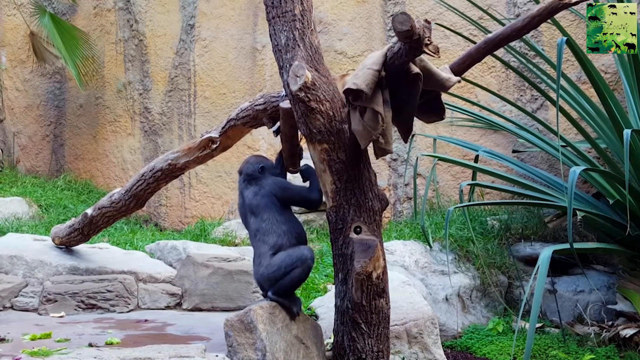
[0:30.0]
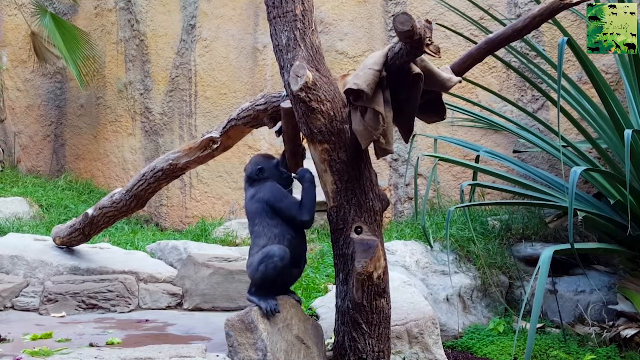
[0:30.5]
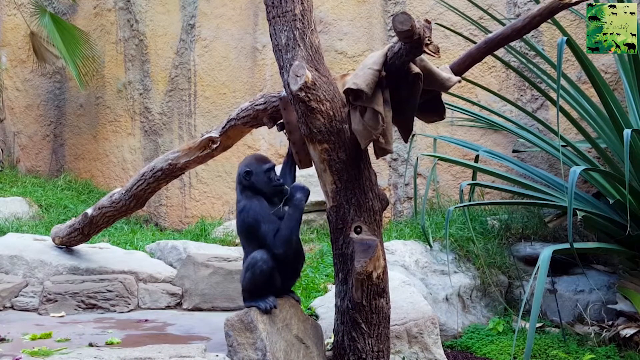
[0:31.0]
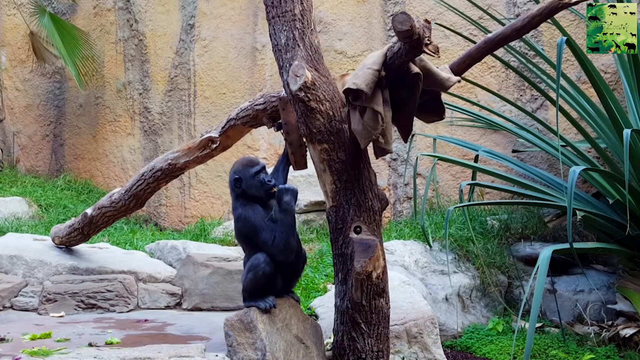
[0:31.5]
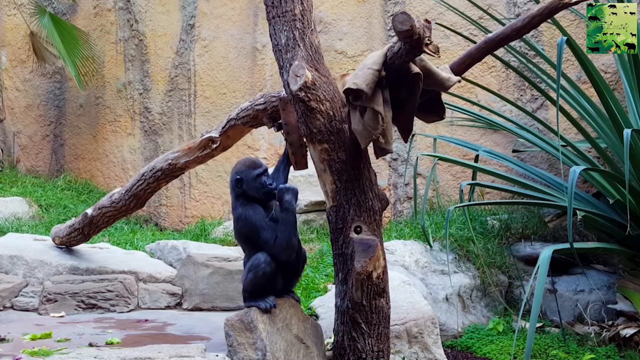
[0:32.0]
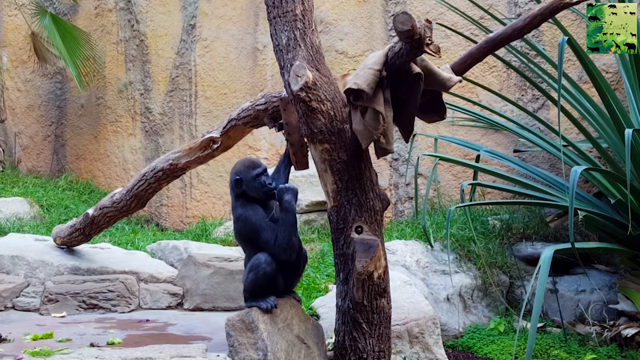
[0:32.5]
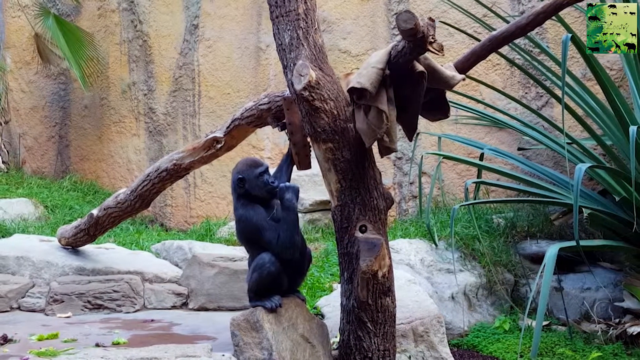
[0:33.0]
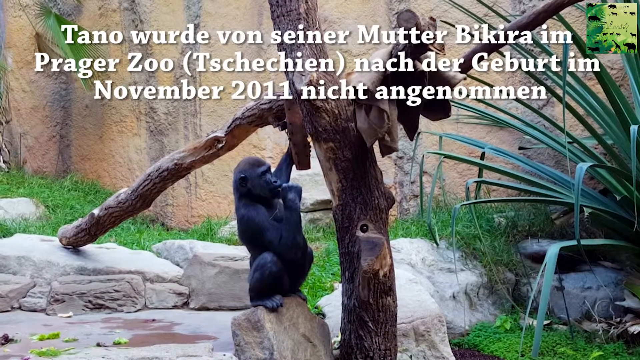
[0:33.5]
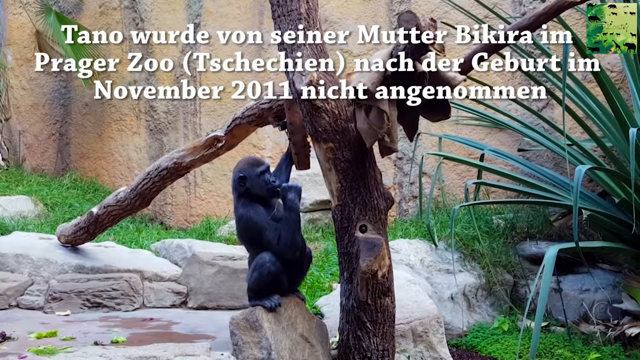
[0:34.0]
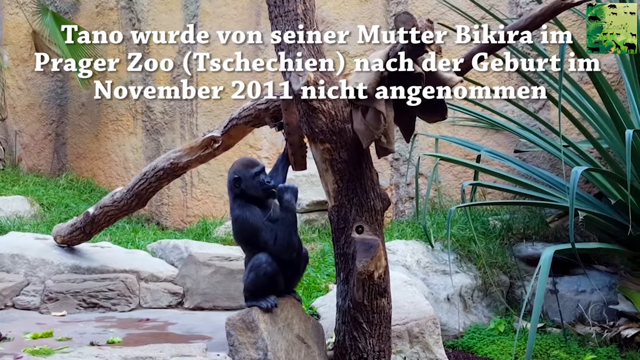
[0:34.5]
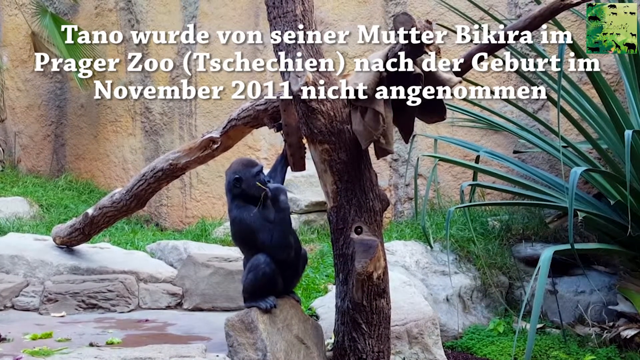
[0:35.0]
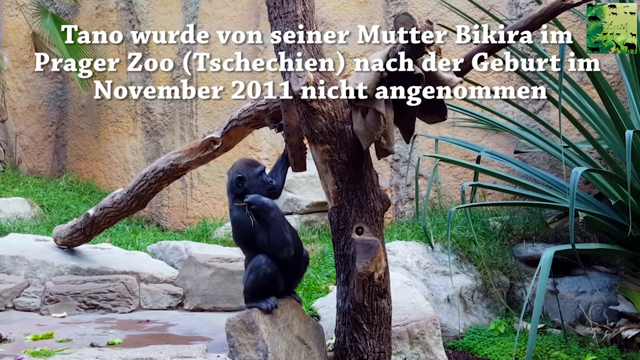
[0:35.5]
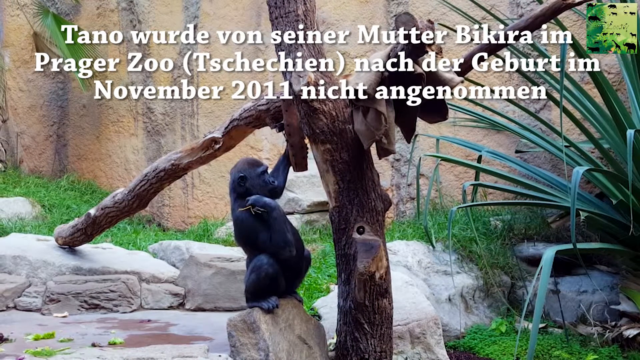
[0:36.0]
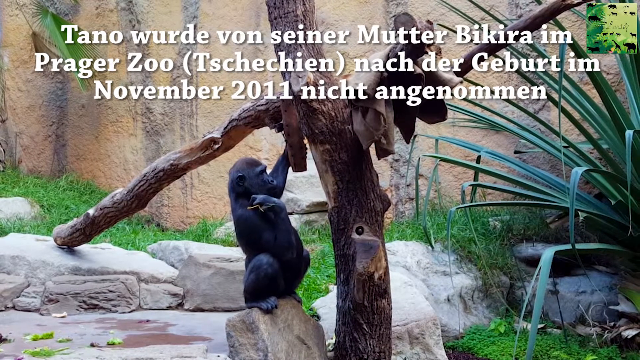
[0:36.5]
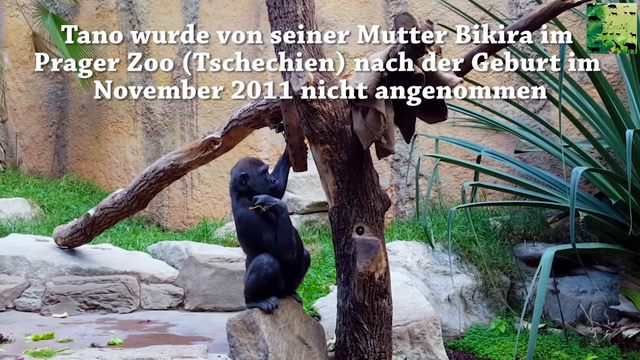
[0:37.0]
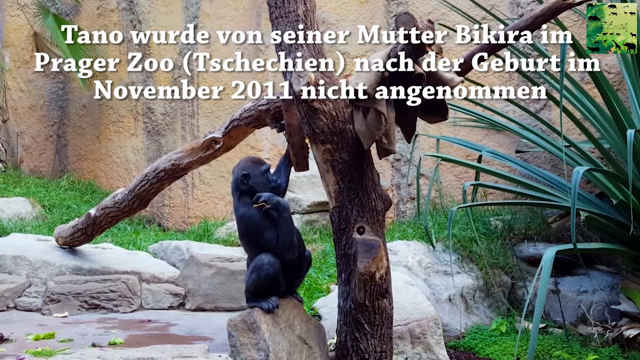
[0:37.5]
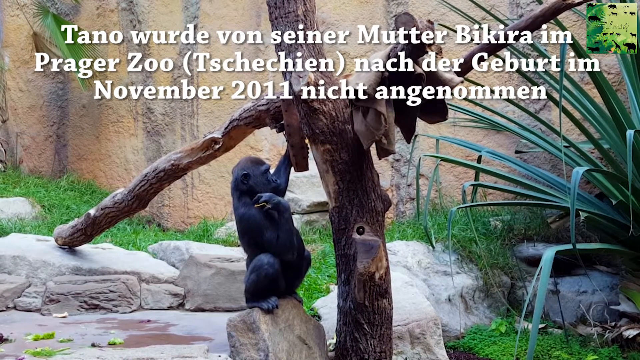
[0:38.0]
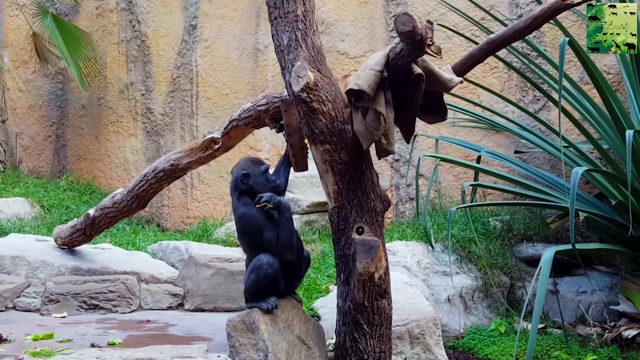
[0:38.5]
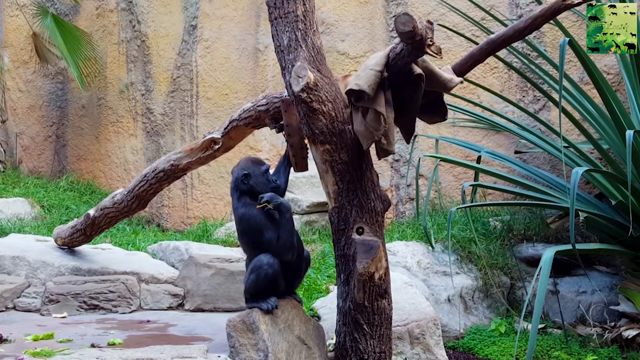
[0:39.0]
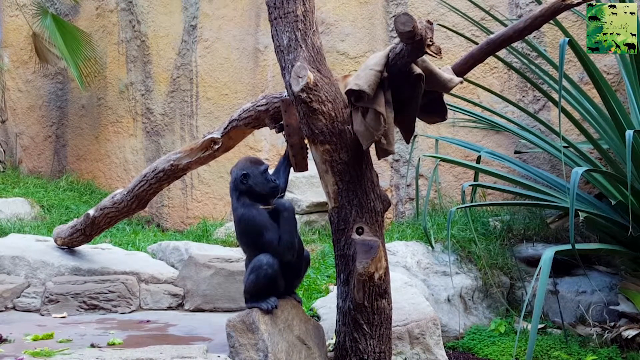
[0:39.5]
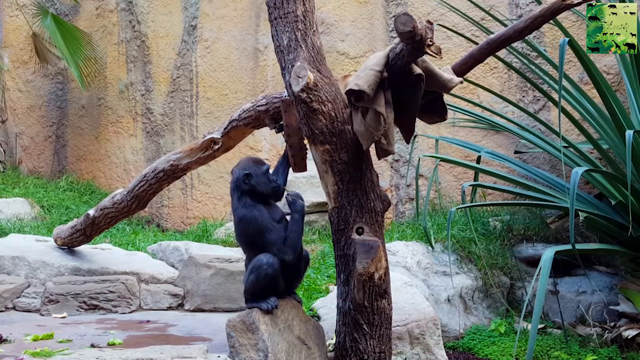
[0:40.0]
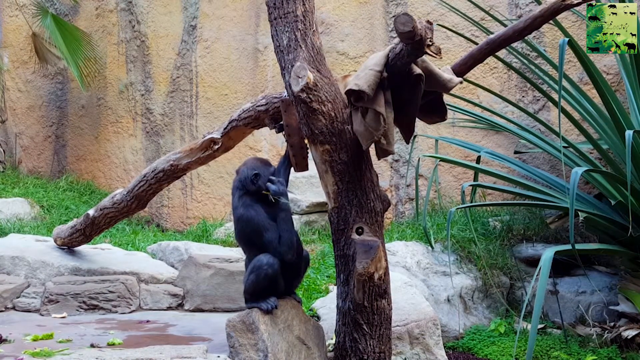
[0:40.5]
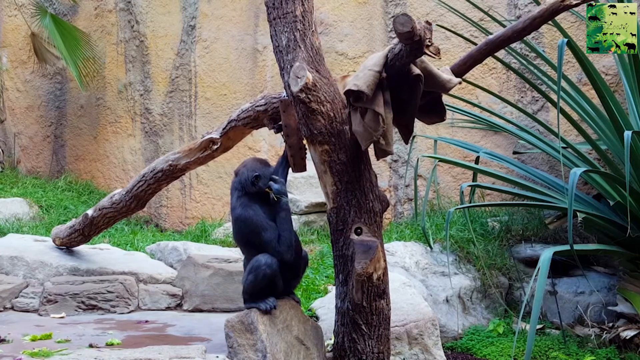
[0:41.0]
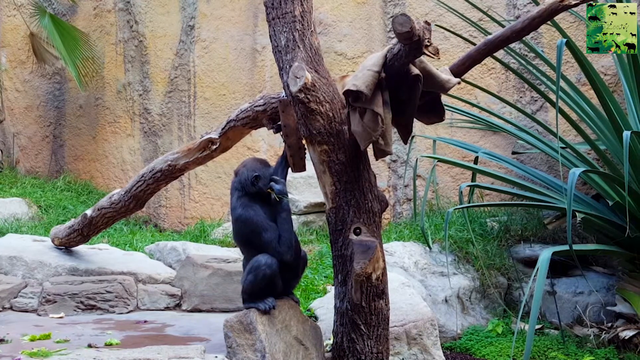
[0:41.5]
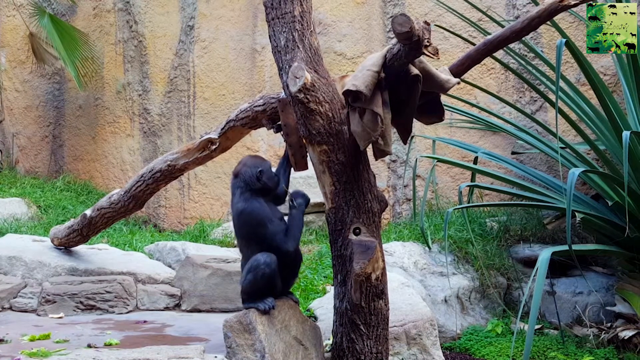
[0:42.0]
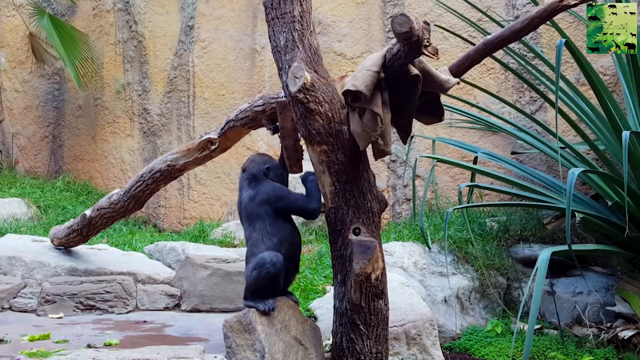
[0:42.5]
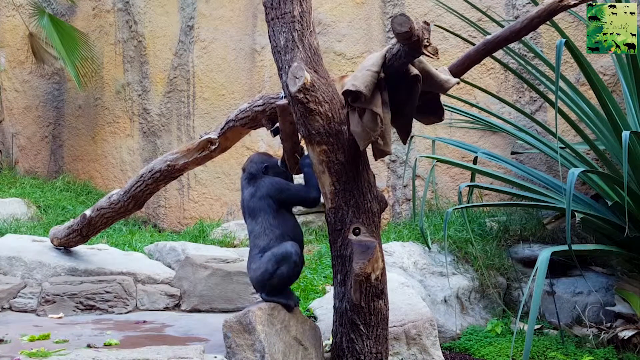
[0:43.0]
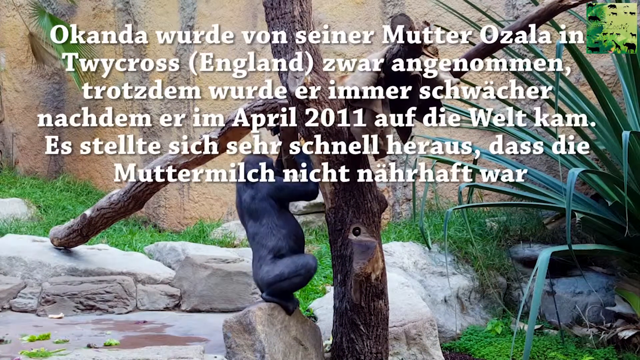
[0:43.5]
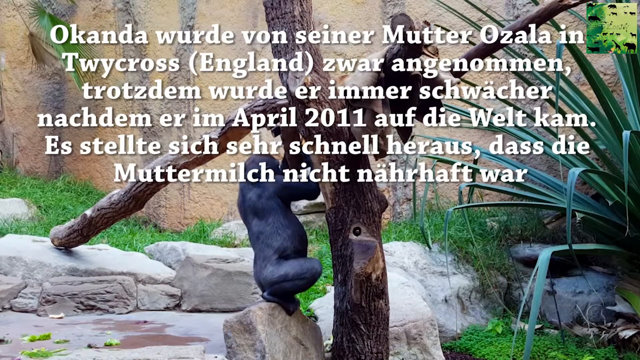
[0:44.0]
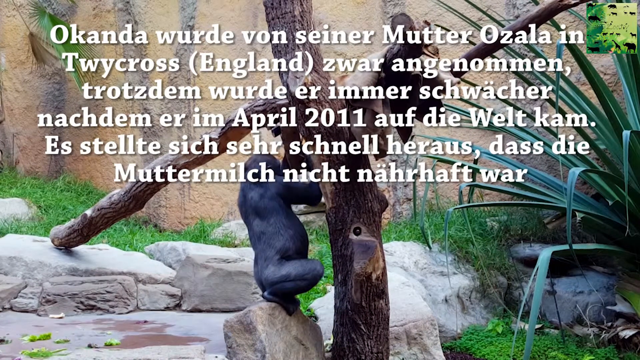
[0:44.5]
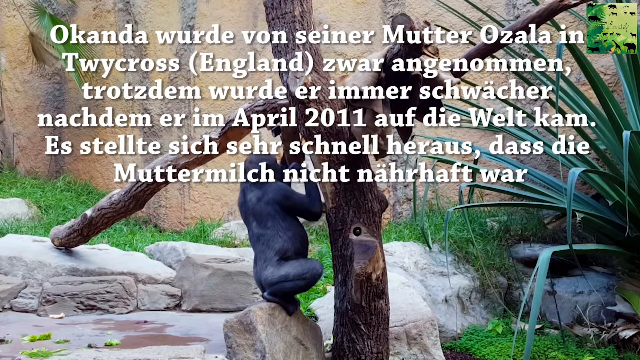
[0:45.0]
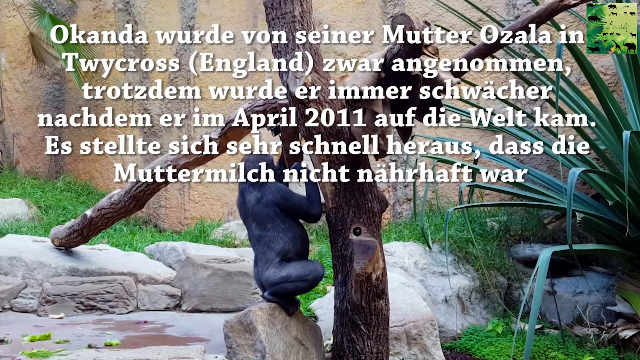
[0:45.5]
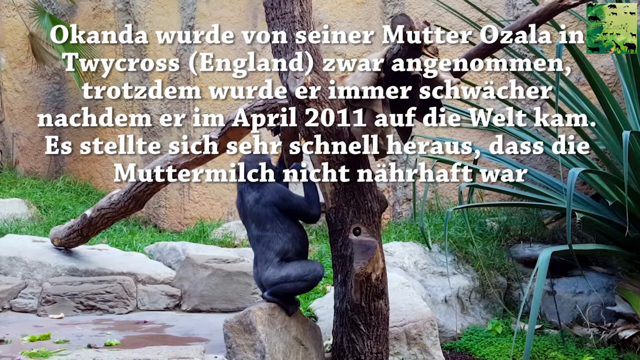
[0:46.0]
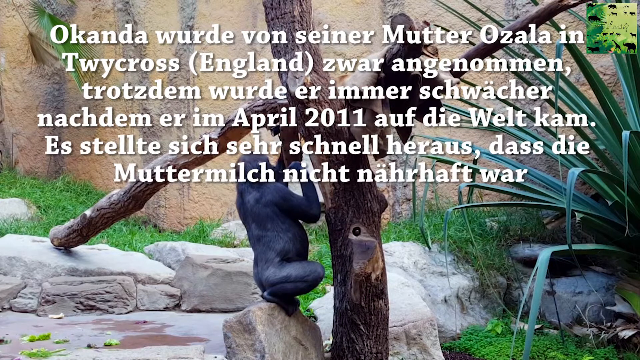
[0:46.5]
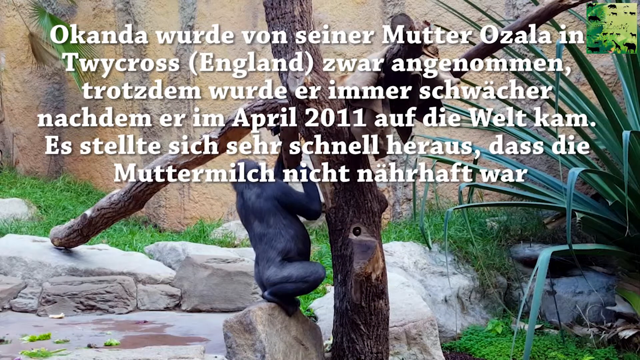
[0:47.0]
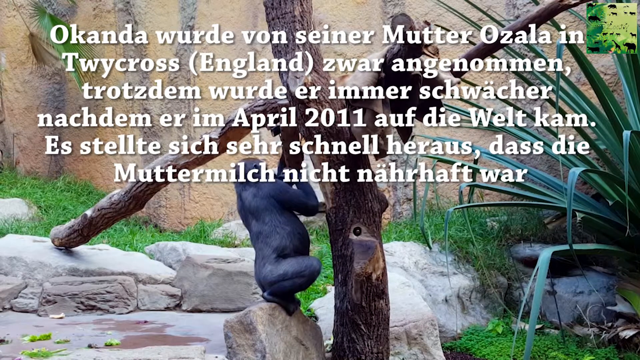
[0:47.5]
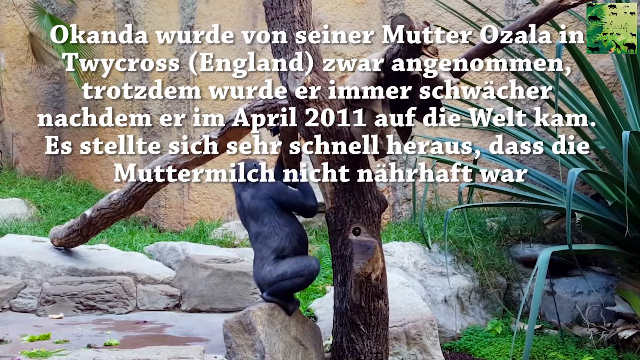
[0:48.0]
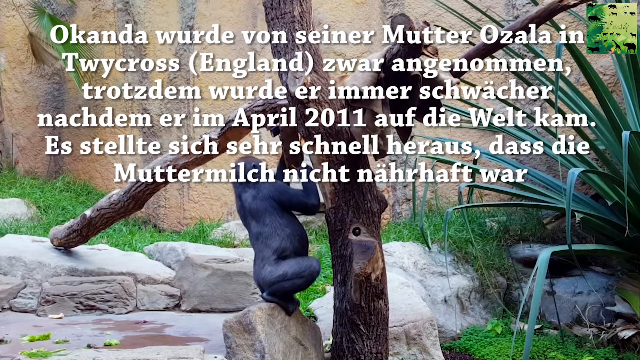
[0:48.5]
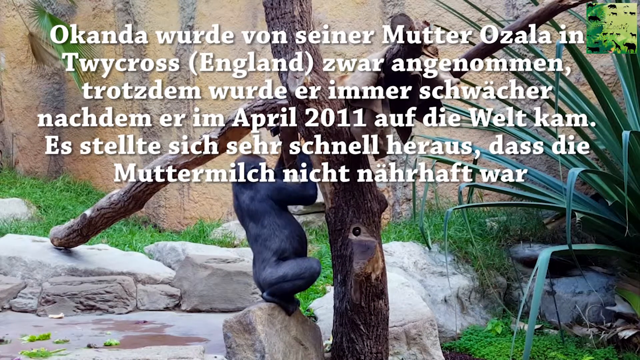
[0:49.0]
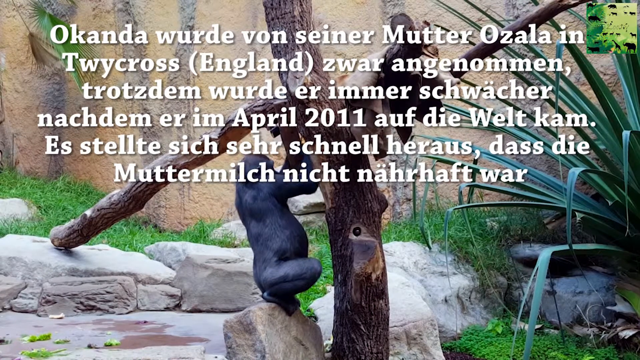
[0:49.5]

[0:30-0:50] The monkey begins to turn away and appears to be sucking on the thumb of the hand that is not holding onto the piece of wood above its head. Another line of text pops up on the screen, including the words "Prager Zoo" and "November 2011". The monkey scratches itself on the shoulder and then the head. It is all black, and its lower legs are in kind of a squatted position while its arms work. A new, much larger piece of text then comes up, taking up about half of the image; it seems to give background on the animal and maybe the zoo itself. At the back of the habitat is kind of a yellow-orange wall that appears to have silhouettes of different tree trunks painted on it in light brown or black paint. They look kind of faded, or are perhaps meant as suggestions rather than literal depictions.